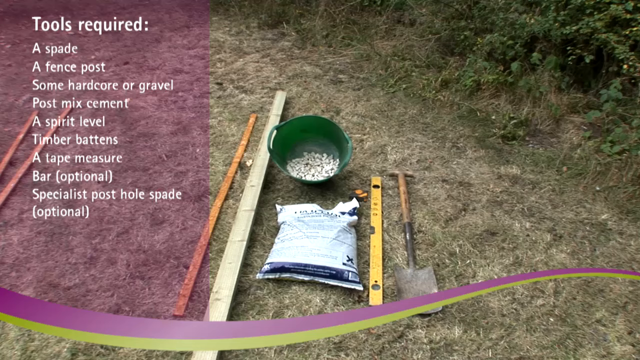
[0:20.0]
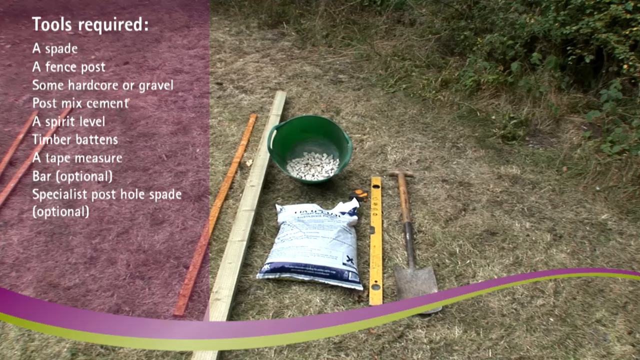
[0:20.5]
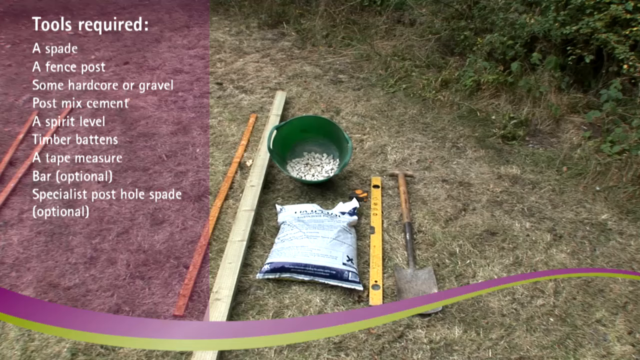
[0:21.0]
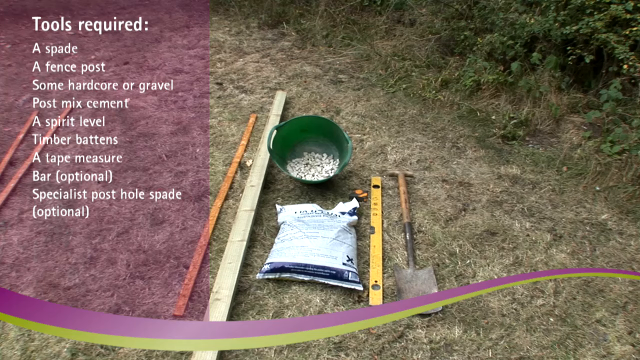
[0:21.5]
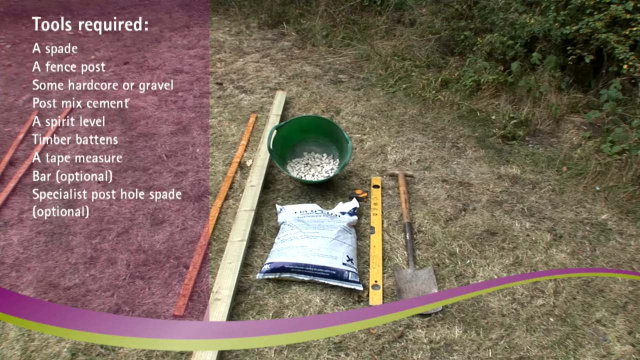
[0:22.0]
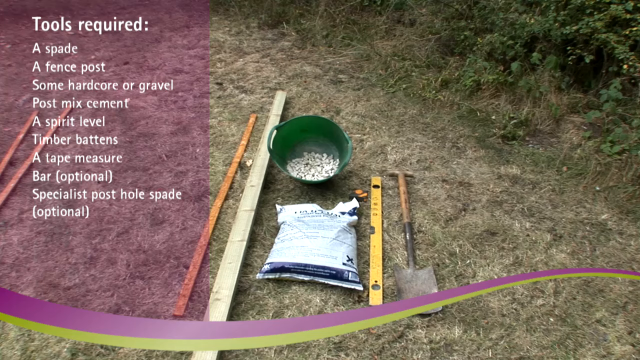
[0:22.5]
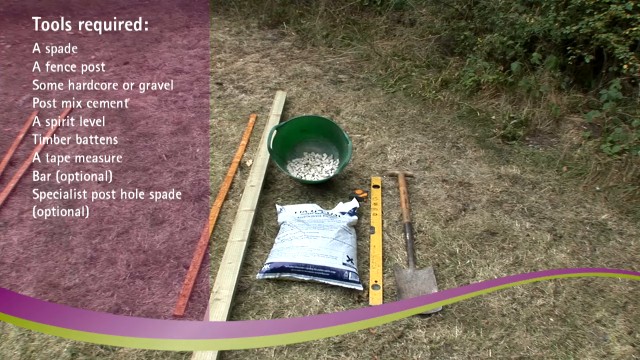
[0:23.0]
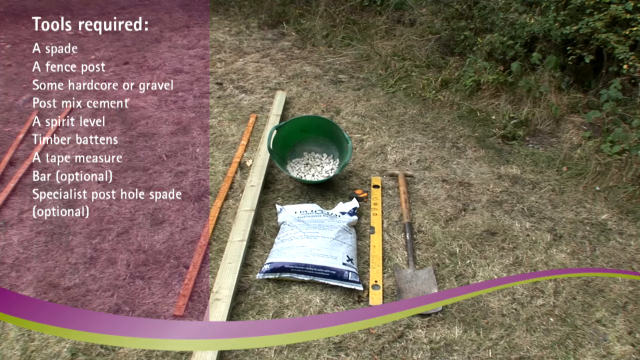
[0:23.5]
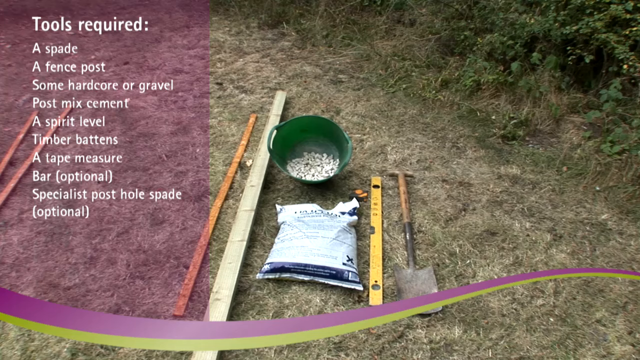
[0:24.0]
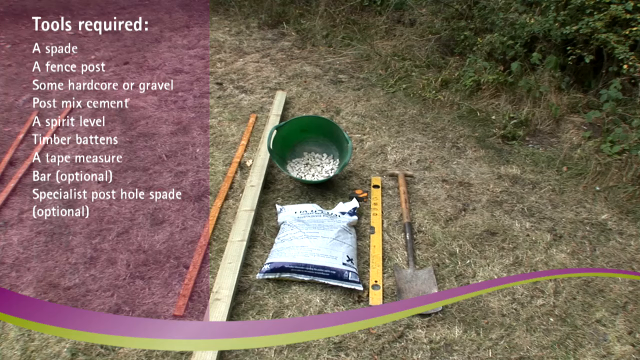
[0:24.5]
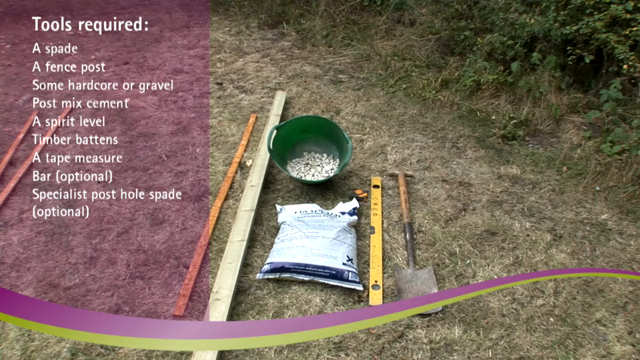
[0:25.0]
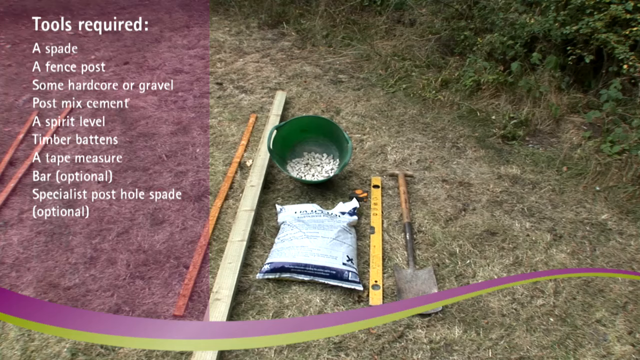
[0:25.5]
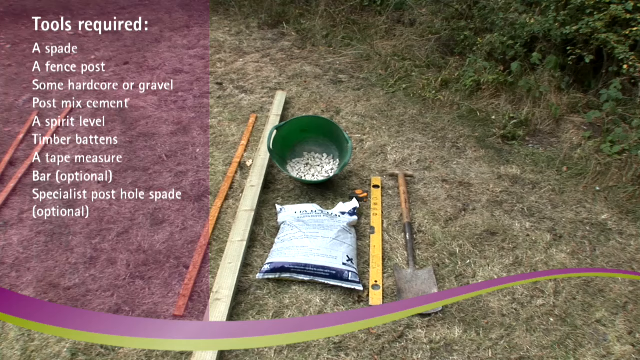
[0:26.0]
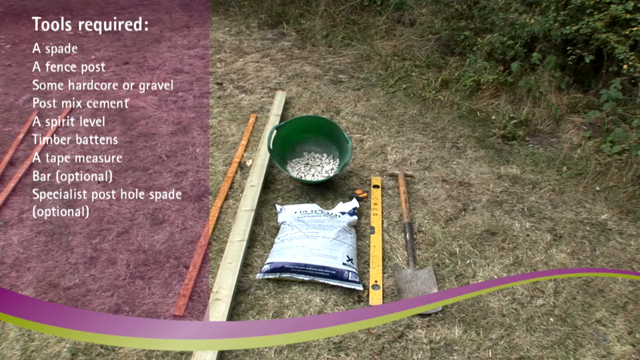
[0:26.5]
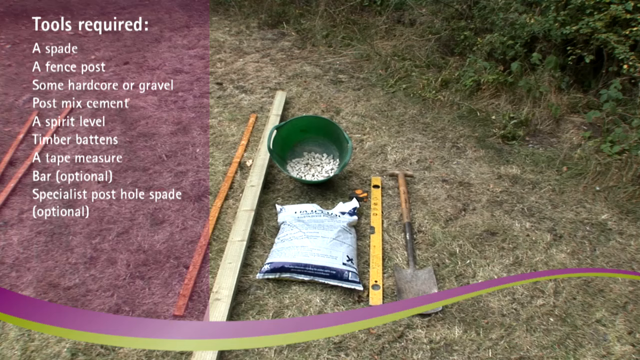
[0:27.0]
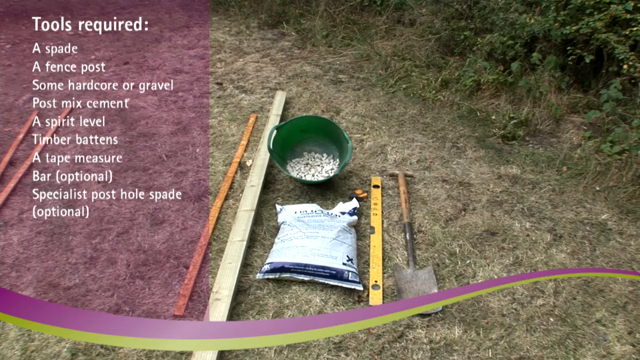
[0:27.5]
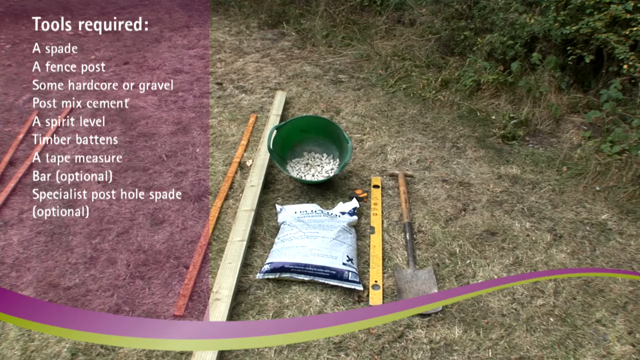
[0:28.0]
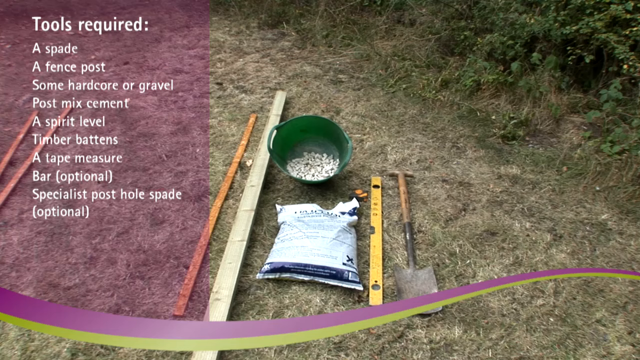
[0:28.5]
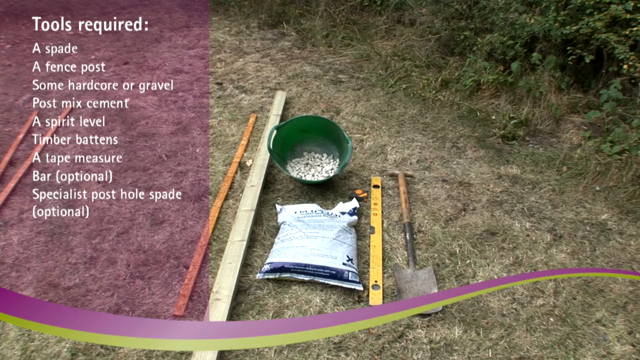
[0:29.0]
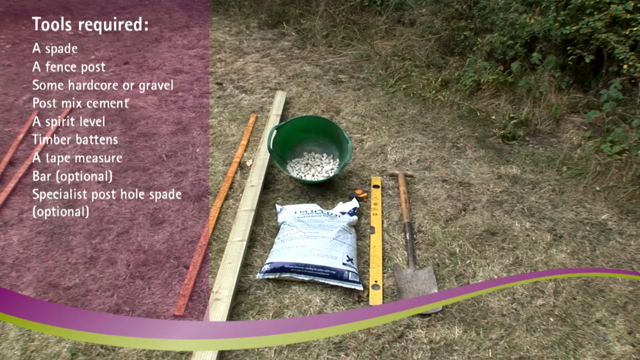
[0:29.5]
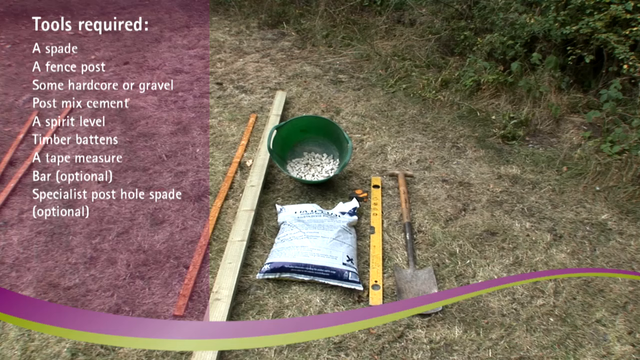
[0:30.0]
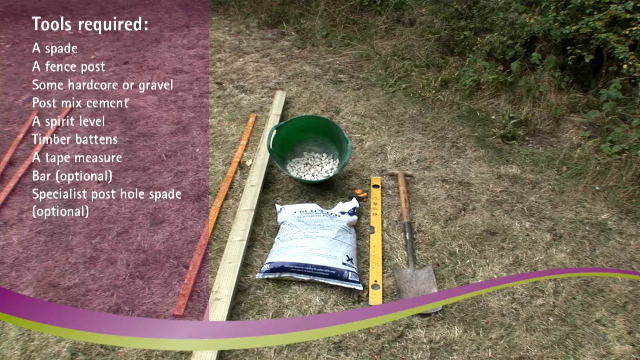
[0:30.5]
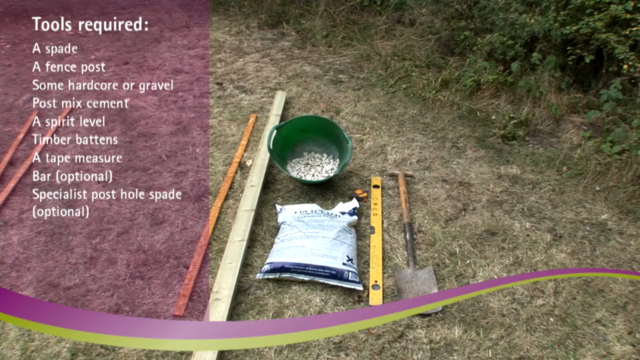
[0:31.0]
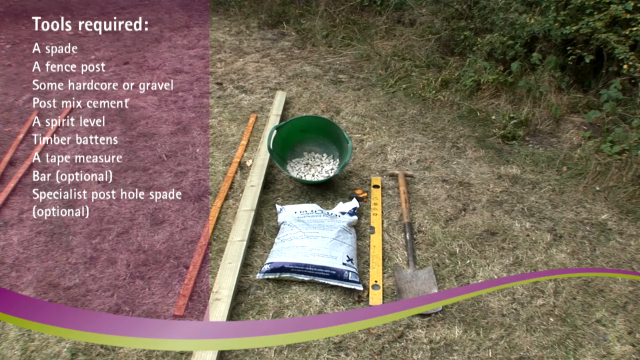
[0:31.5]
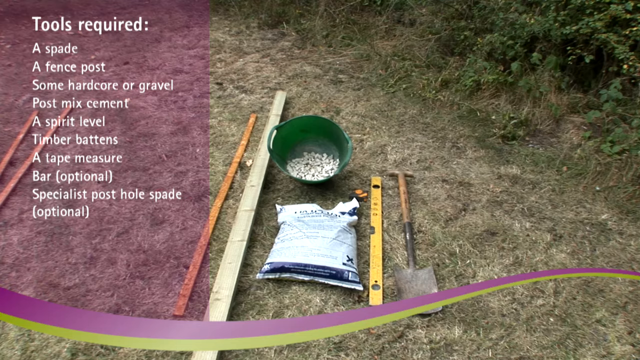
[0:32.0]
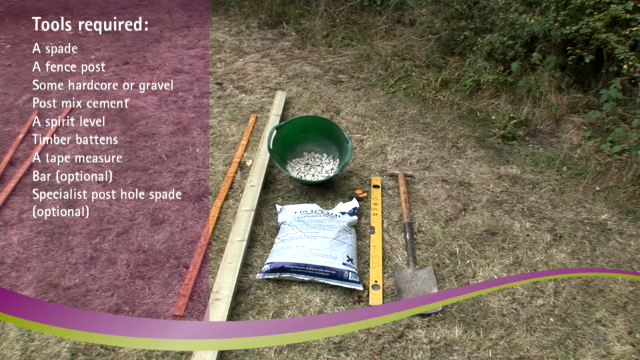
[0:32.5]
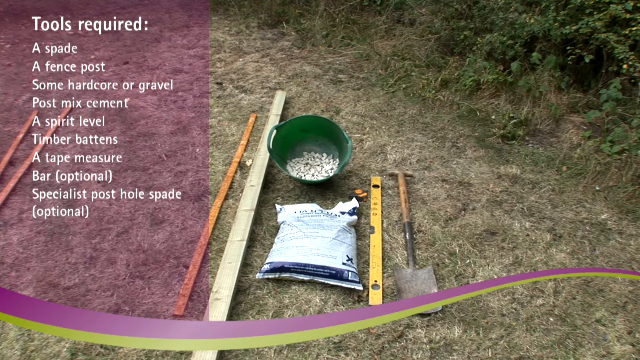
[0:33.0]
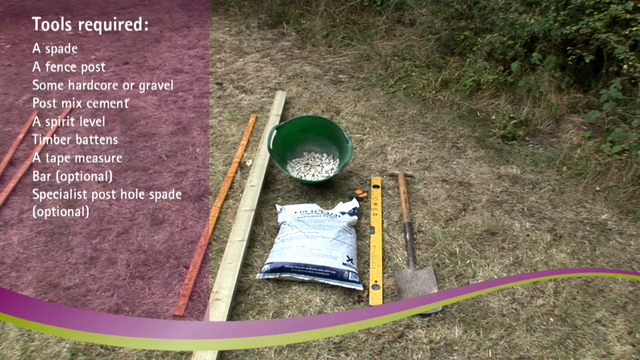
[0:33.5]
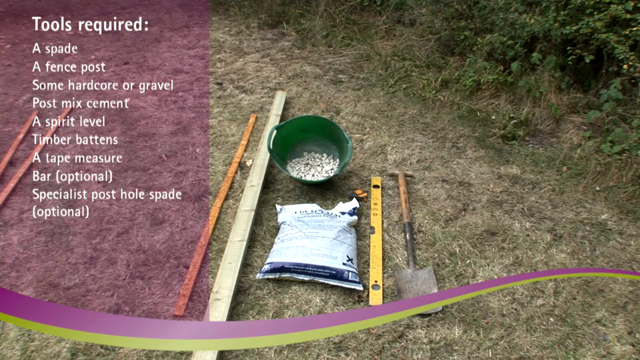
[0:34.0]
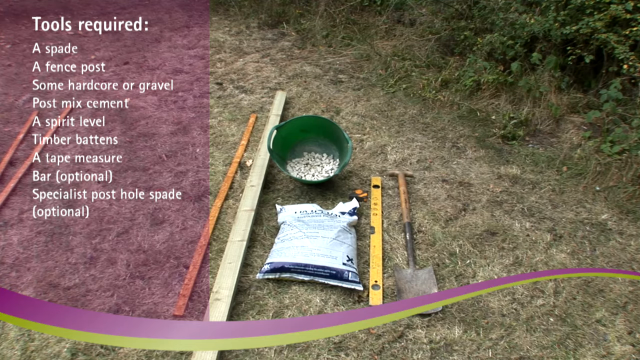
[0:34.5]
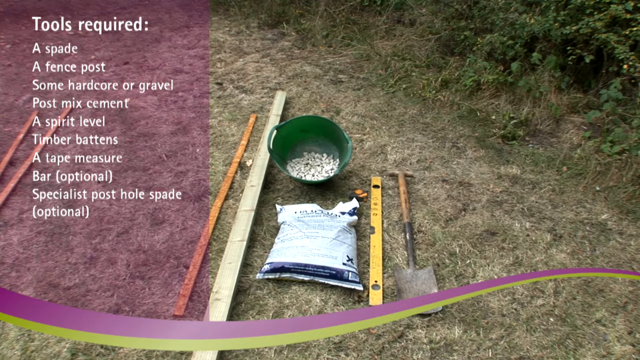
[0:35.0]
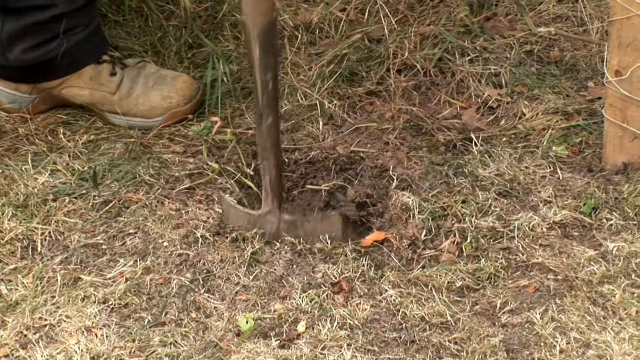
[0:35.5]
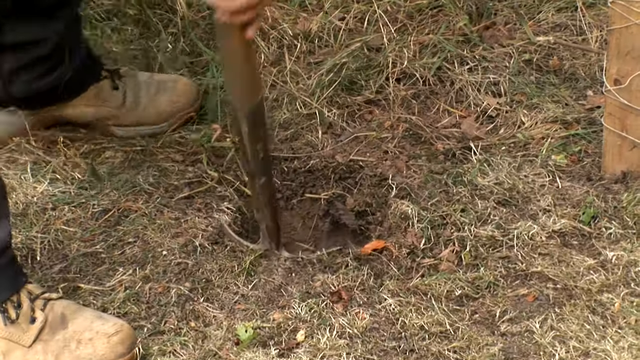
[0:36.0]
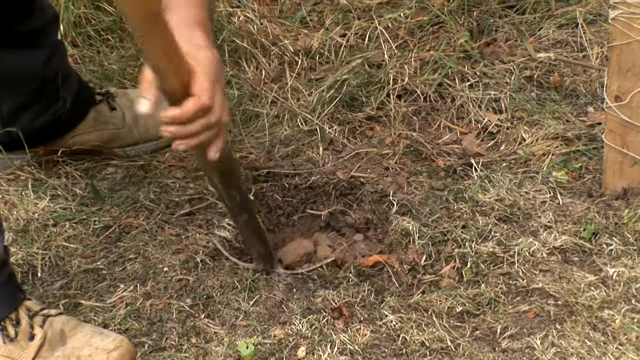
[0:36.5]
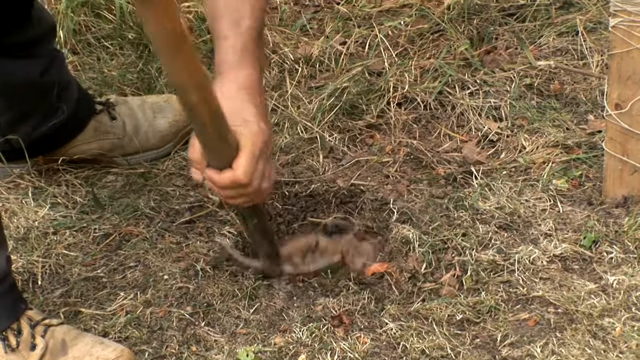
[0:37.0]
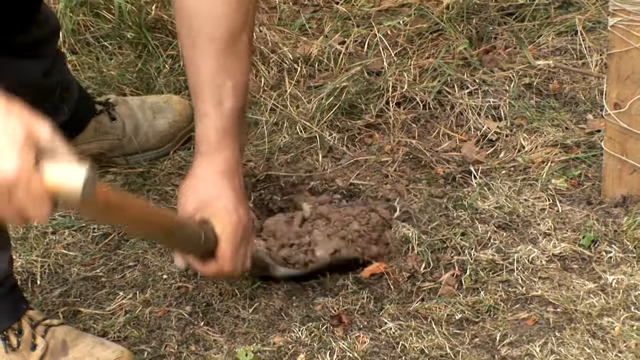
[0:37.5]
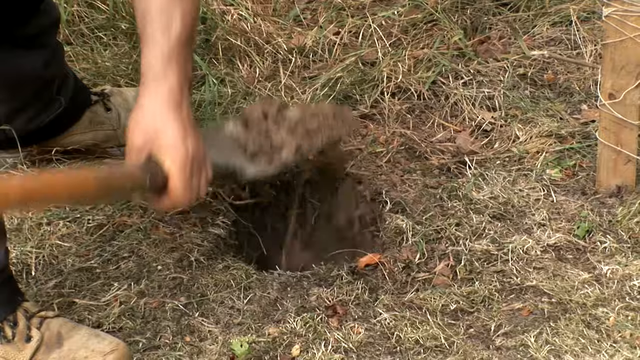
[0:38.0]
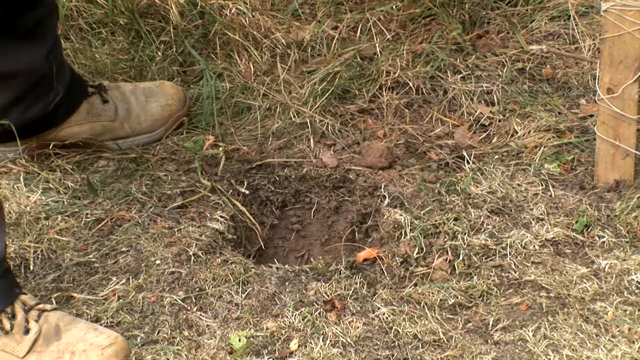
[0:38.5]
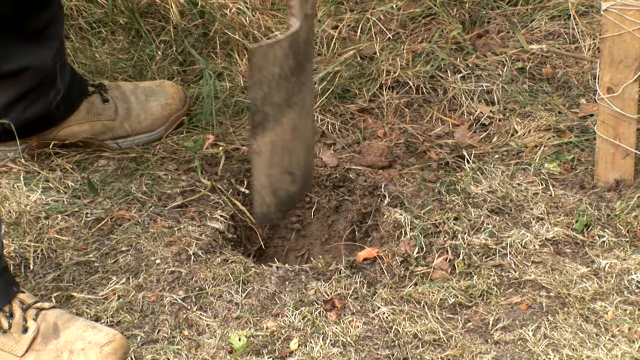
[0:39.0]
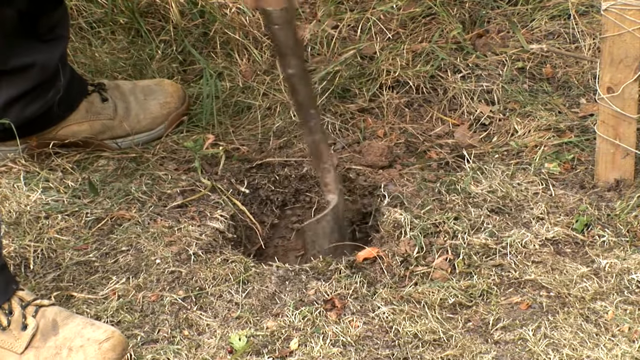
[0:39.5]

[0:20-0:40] A picture of the ground shows a green bucket, a bag of soil, a yardstick, a spade and a couple of pieces of wood. On the left side of the screen is a list of what is needed to make a hole for a fence post: a fence post, hard core or gravel, post mix cement, a spirit level, timber battens, a tape measure and a spade, plus a specialist post hole spade and a bar, both marked optional. Someone then takes the spade and starts digging the hole in the ground; the man digging wears black jeans and brown boots.